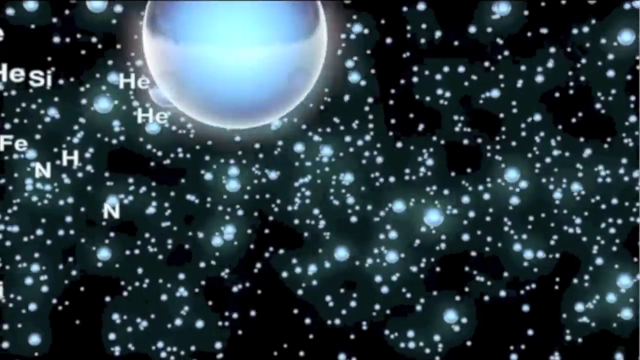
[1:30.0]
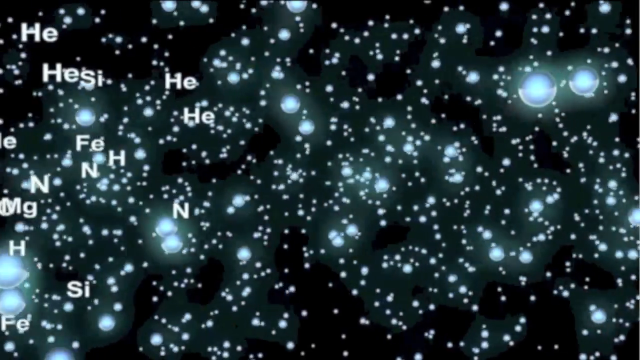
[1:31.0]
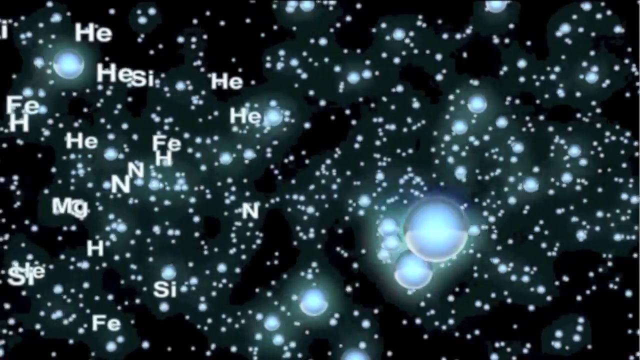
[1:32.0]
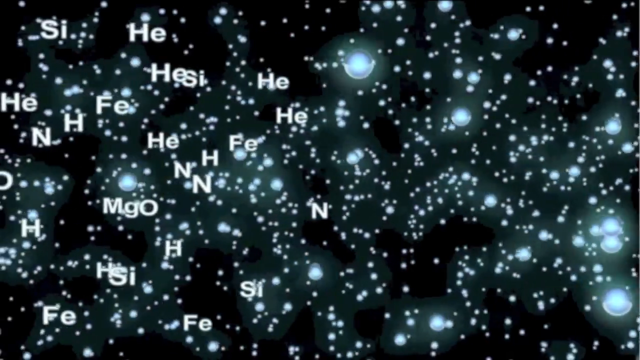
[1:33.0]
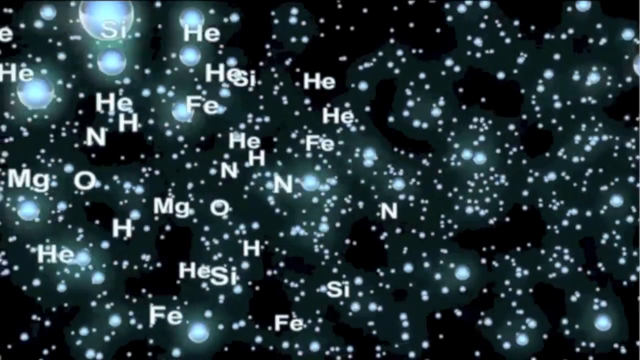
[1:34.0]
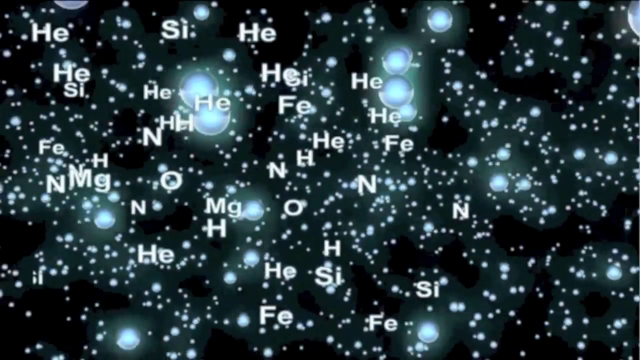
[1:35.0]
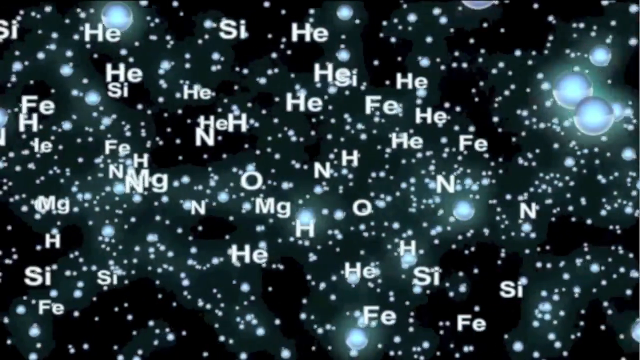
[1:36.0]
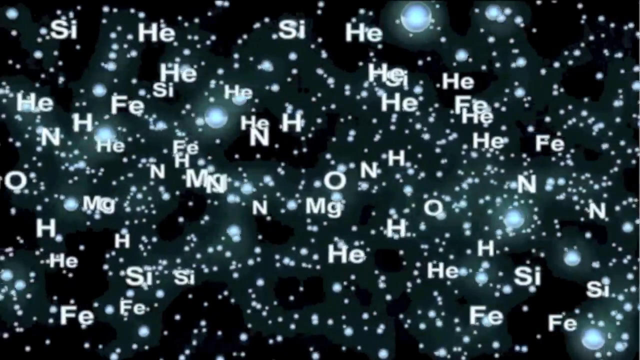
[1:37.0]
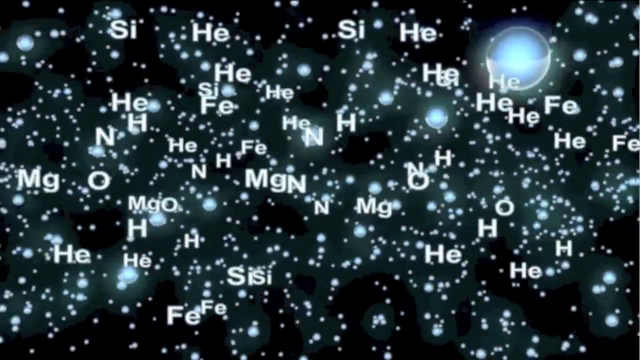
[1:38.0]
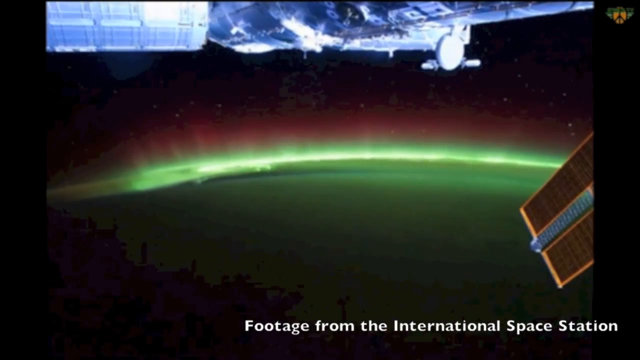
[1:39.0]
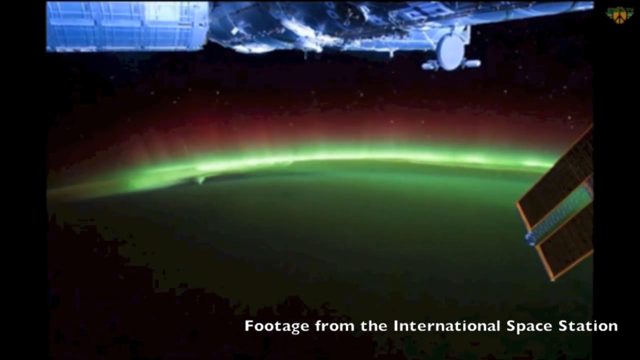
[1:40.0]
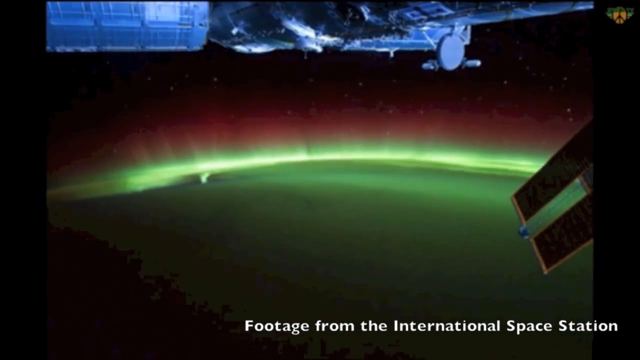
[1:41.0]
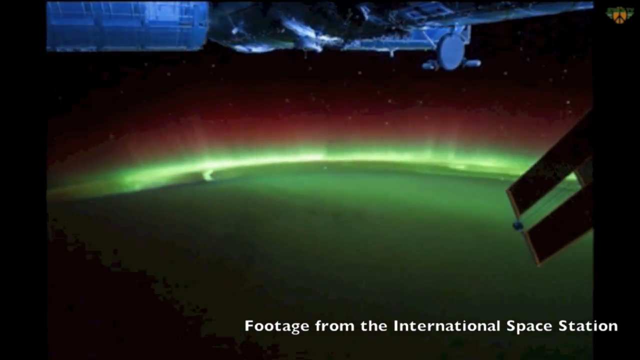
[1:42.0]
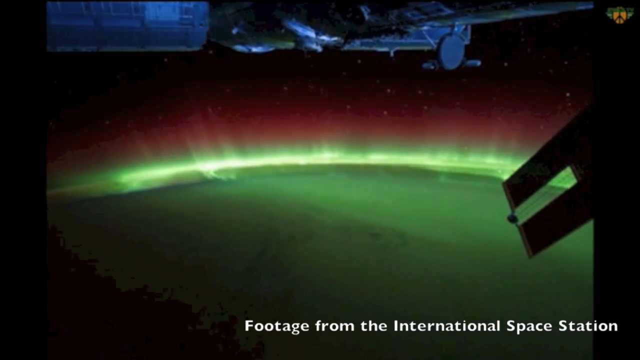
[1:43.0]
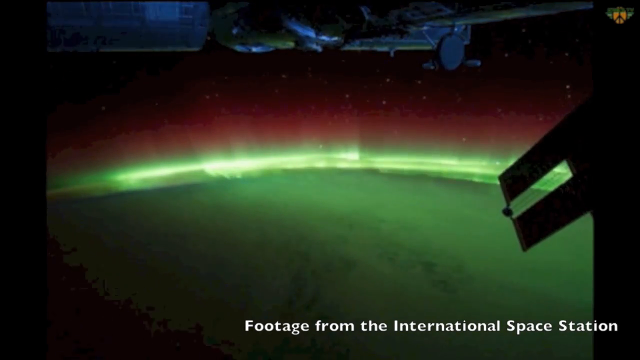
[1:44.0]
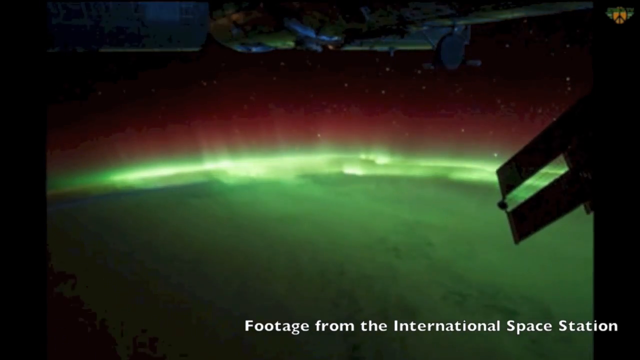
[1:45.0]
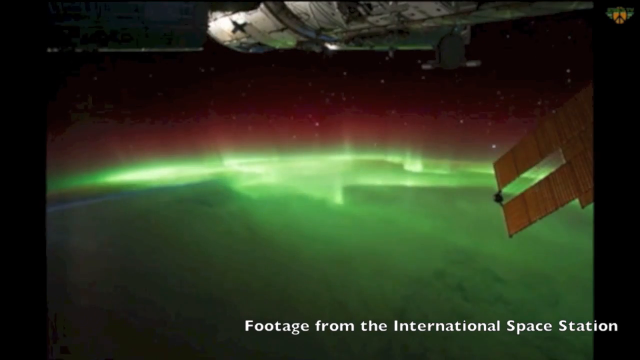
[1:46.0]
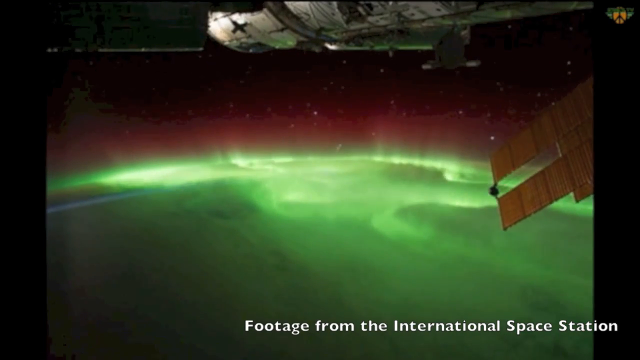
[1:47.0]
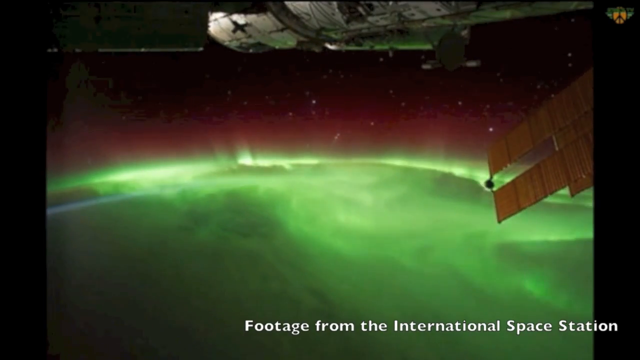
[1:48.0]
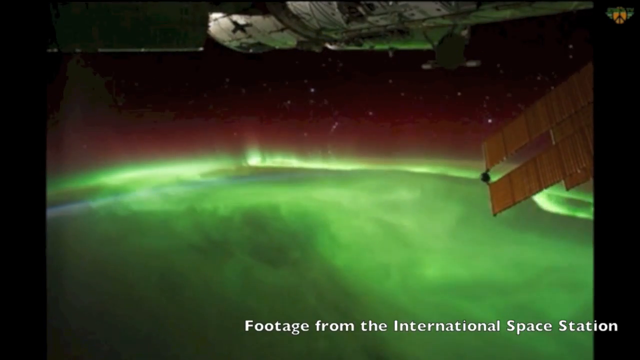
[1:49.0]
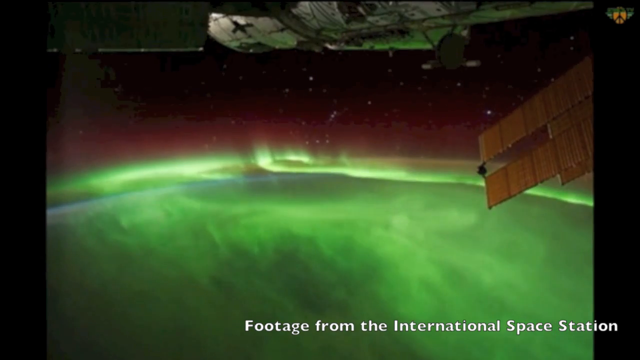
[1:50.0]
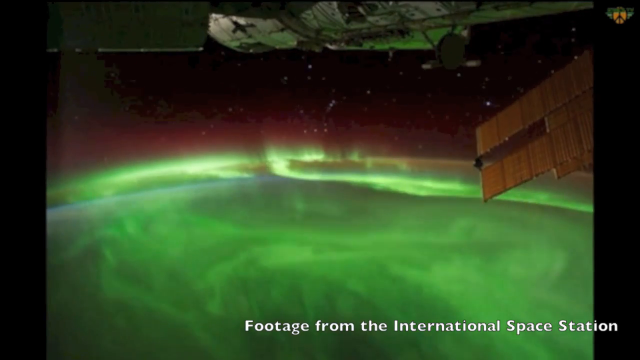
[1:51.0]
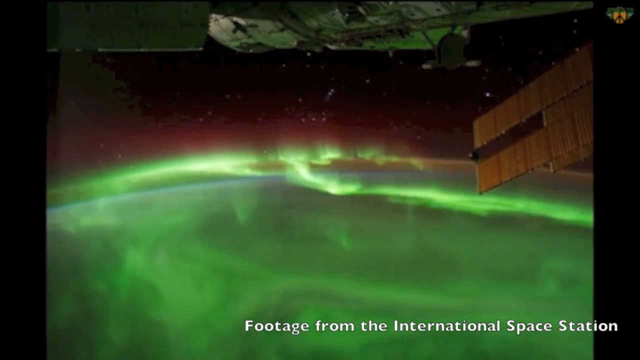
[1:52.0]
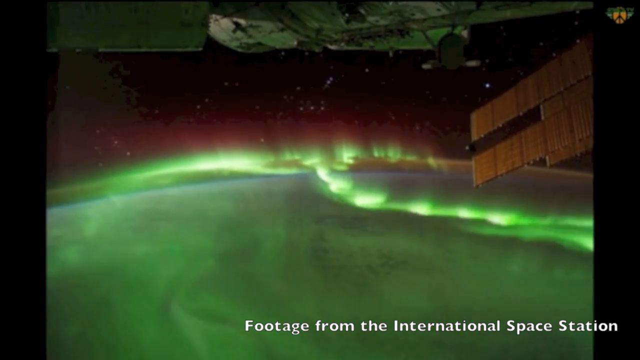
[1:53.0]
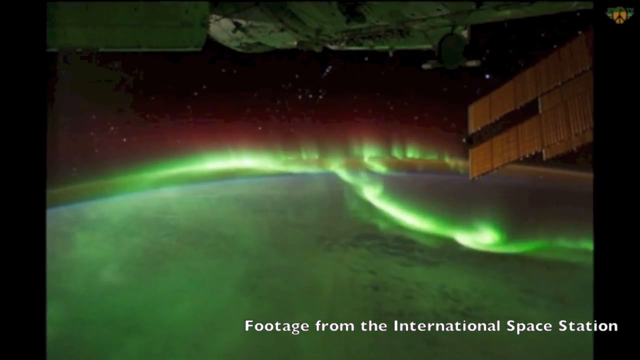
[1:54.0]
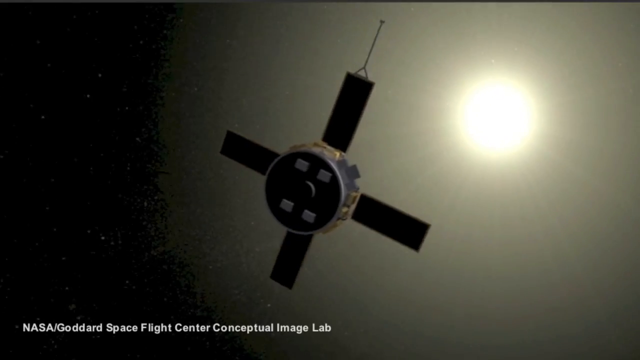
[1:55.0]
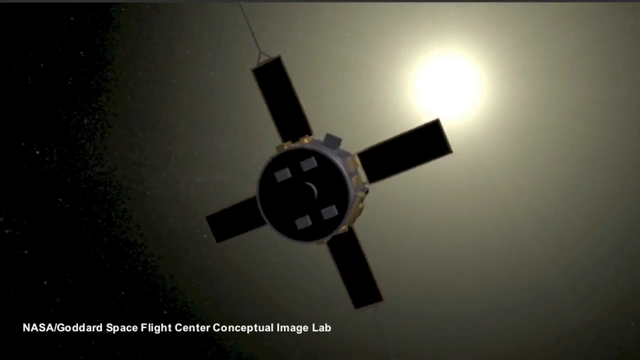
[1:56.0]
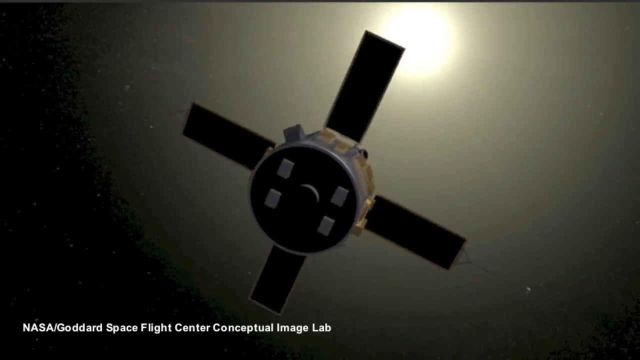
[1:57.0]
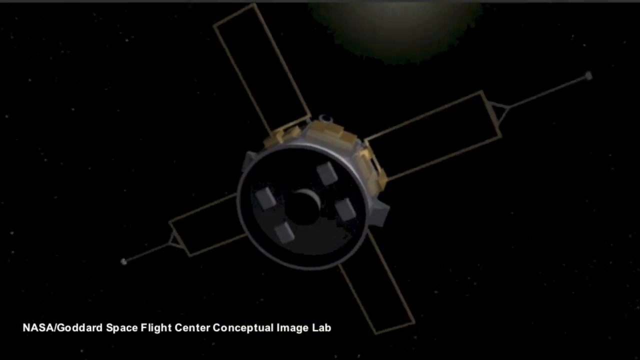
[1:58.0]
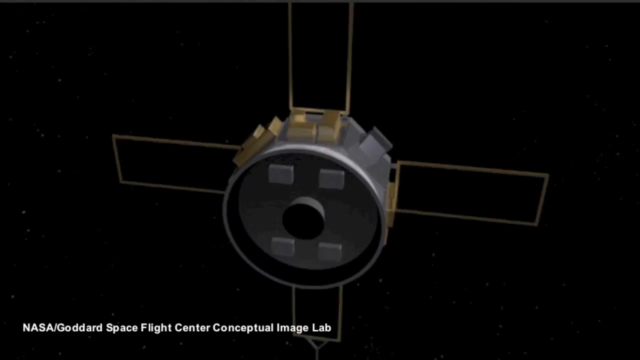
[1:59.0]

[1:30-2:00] A 3D rendering on a black background shows multiple glowing blue orbs traveling from left to right and picking up speed. On the left appear multiple letters, presumably representing elements: "N," "Si," "H," "Mg," "O," "Fe," and "H." The video then cuts to footage labeled as coming from the International Space Station. On the right side a solar panel comes in from the right edge of the screen, pointing downward. What seems to be the planet Earth glows green with its atmosphere, and at the very top is the International Space Station itself, made up of large cylinder-shaped components. Earth slowly rotates toward the bottom of the screen and becomes brighter and brighter; the atmosphere and clouds glow green and brighten as it keeps rotating downward, seeming almost like straight lines of smoke. The video then cuts to a 3D rendering of a satellite labeled "NASA Goddard Space Flight Center conceptual image lab." A yellow sun is in the distance, and in the foreground is a satellite with solar panels coming off it in four different directions. It slowly spins counterclockwise as the camera pans in closer.